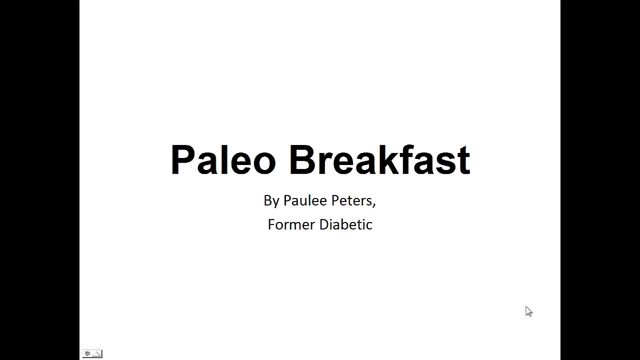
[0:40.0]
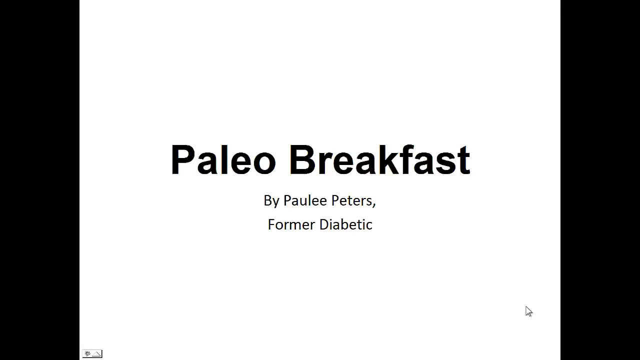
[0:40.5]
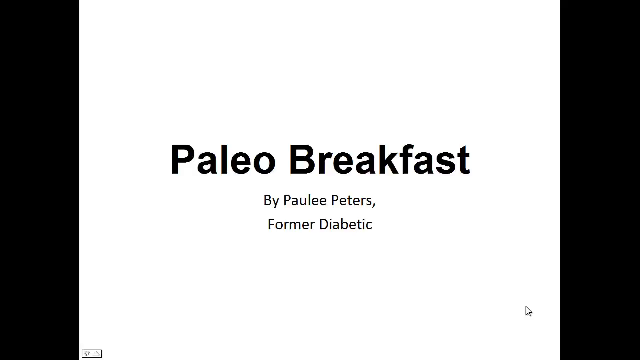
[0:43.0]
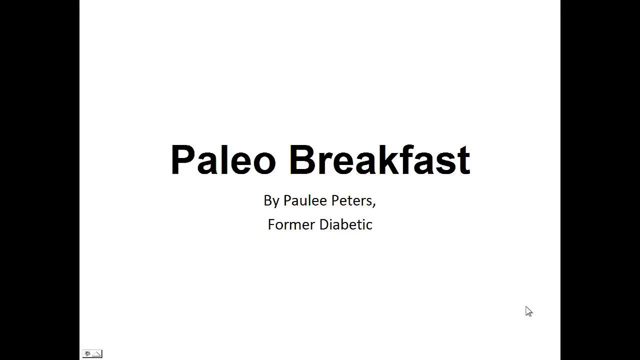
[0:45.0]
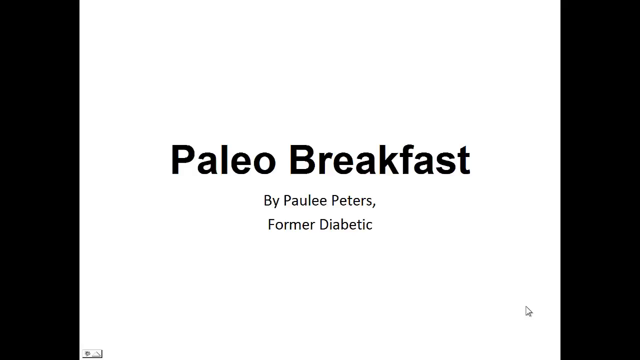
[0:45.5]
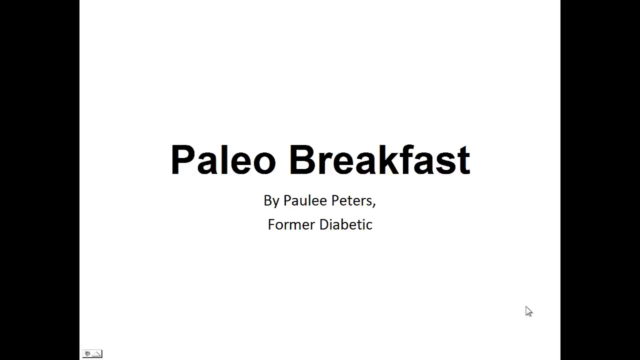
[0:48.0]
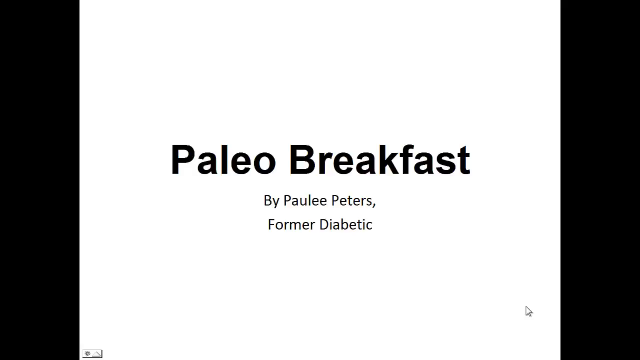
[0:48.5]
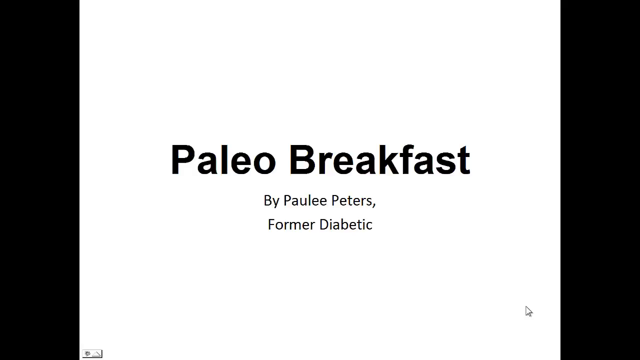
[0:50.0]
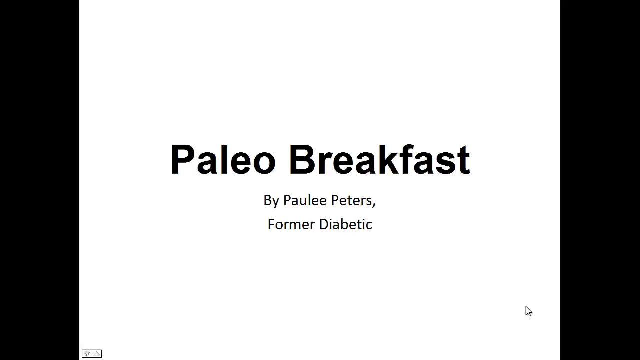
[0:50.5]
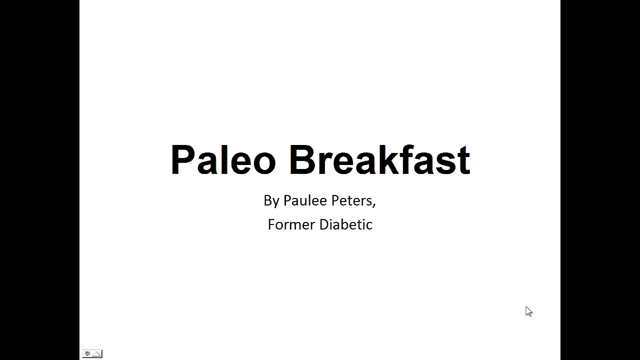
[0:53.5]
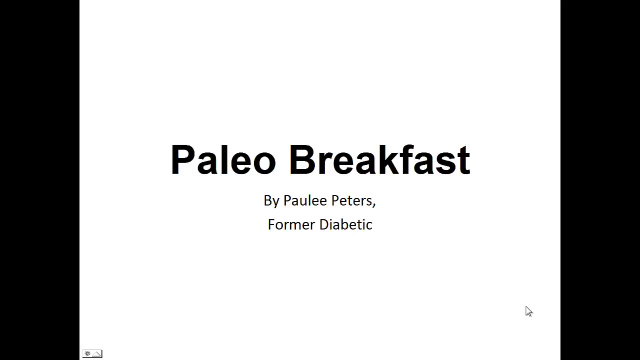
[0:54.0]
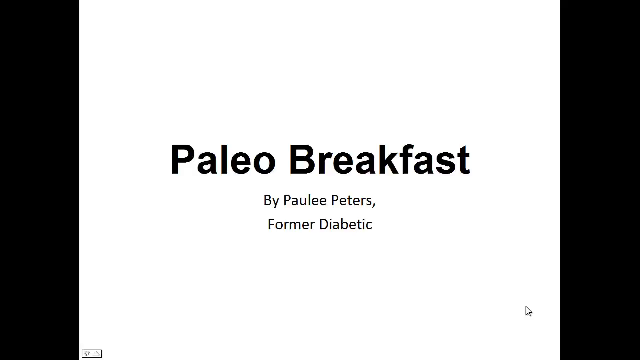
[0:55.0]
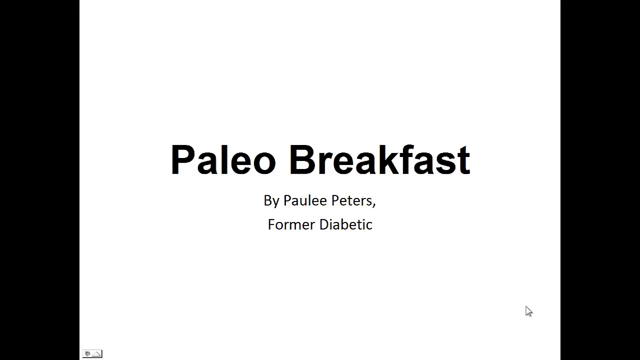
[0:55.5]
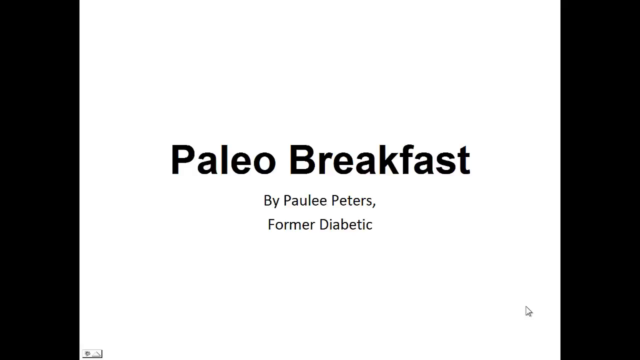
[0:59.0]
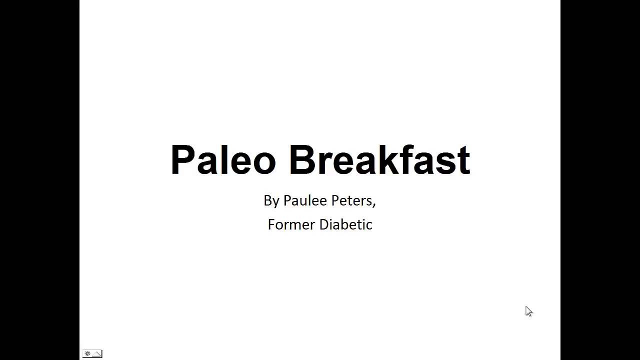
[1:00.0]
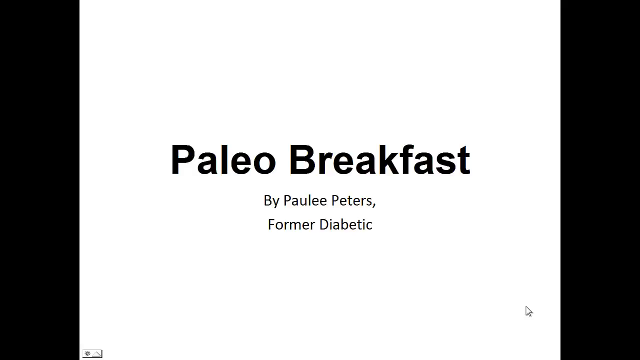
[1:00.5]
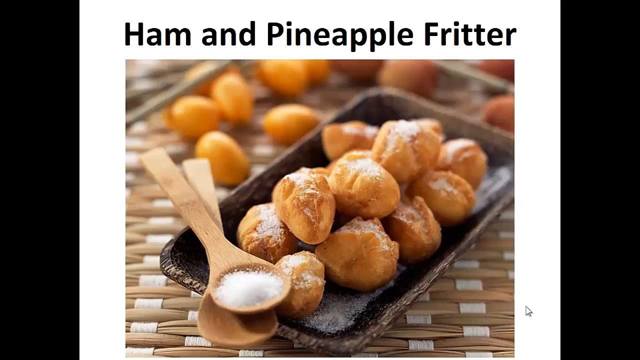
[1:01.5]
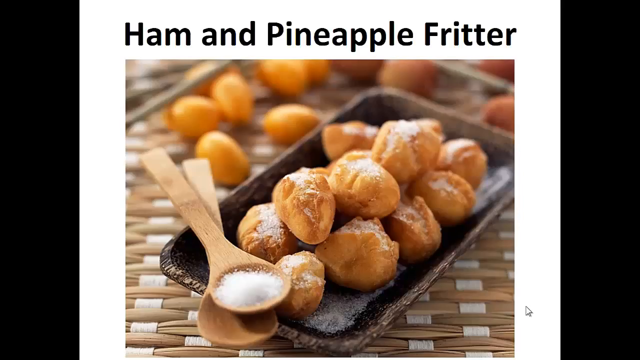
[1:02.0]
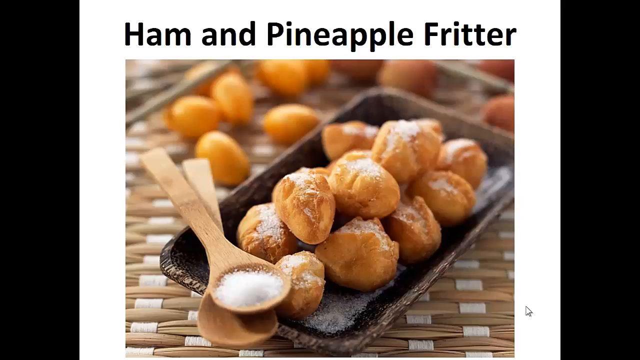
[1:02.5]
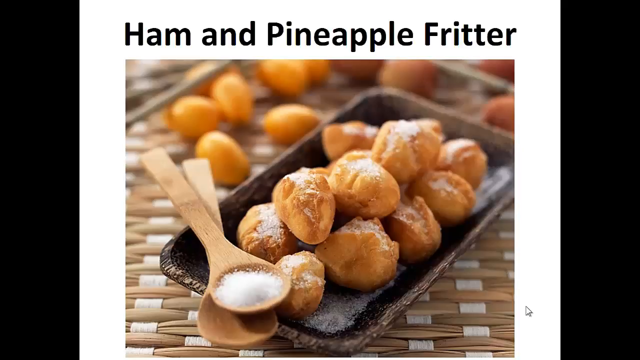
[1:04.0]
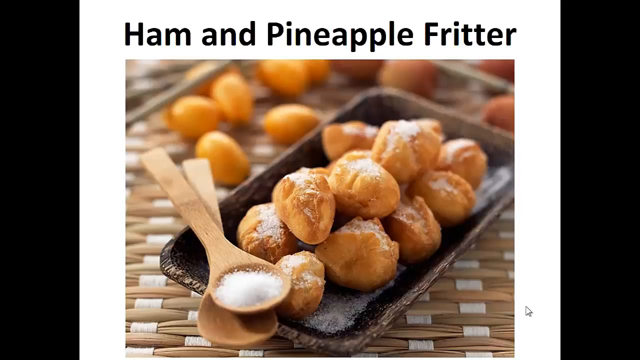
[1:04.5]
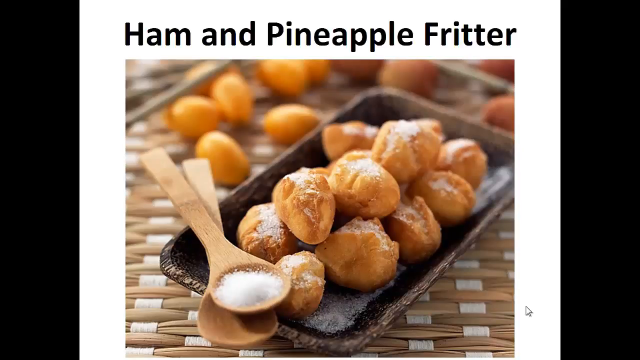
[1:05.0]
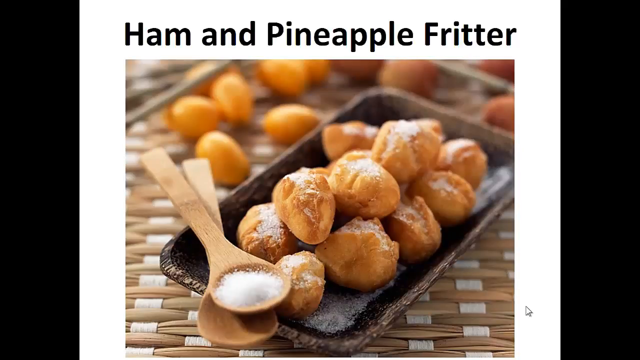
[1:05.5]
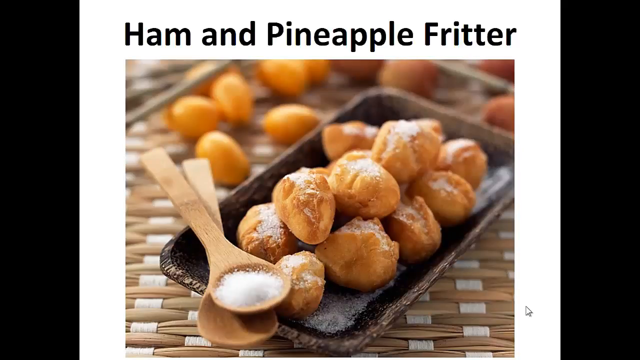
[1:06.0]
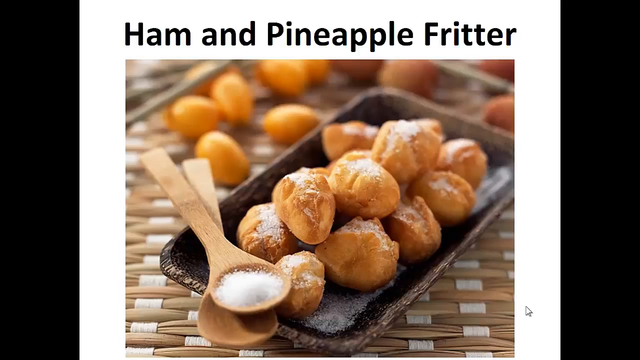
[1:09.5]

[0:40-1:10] A rectangular screen has a black background, and inside it is a white square. In the middle of the white square, bold text in a normal font size reads "paleo breakfast", with "by pauli peters" beneath it and "former diabetic" under that. A small mouse cursor at the bottom right is pointing up, close to the wording at the center. At the bottom of the video there is a small rectangle that looks like it has icons inside. Then a tray with fritters appears, with "ham and fritter" written at the top. Under the text is a photo of the fritters and two wooden spoons on top of each other; the top spoon has white solids that look like sugar or salt.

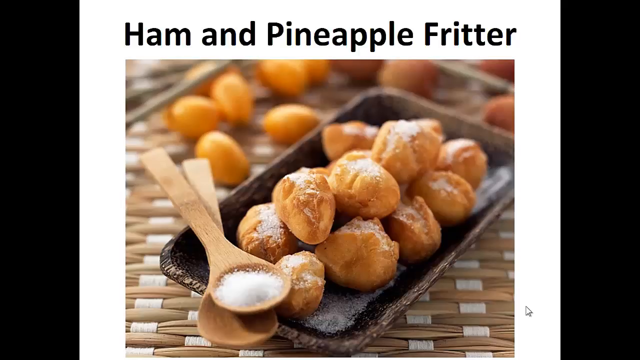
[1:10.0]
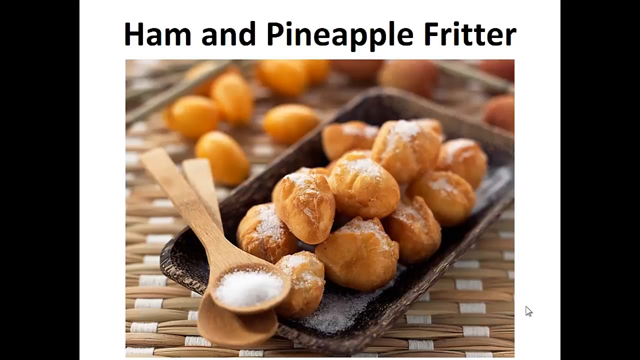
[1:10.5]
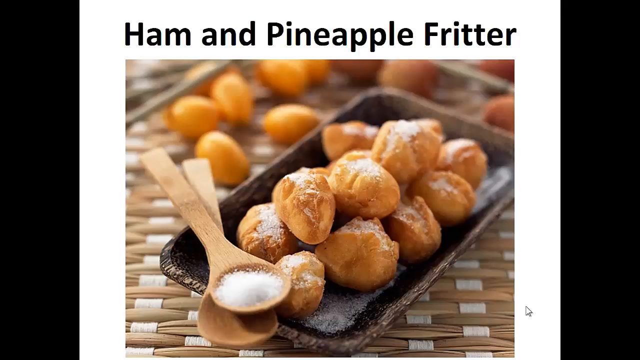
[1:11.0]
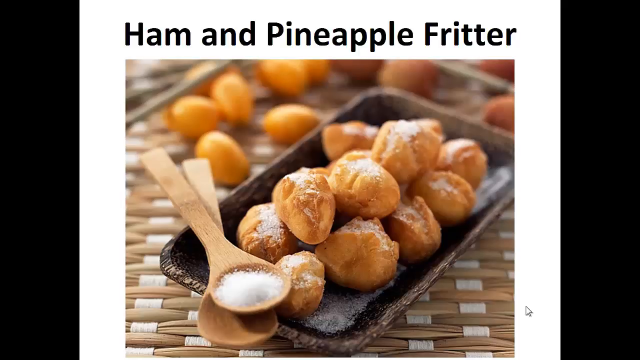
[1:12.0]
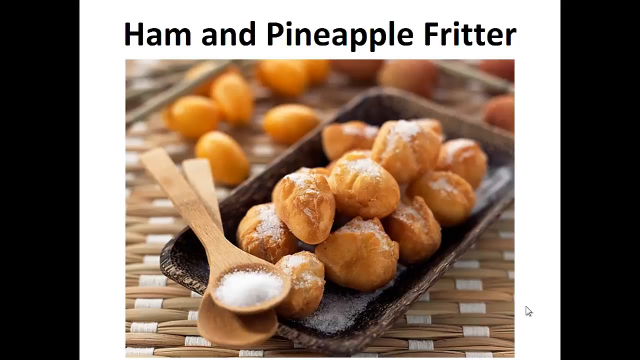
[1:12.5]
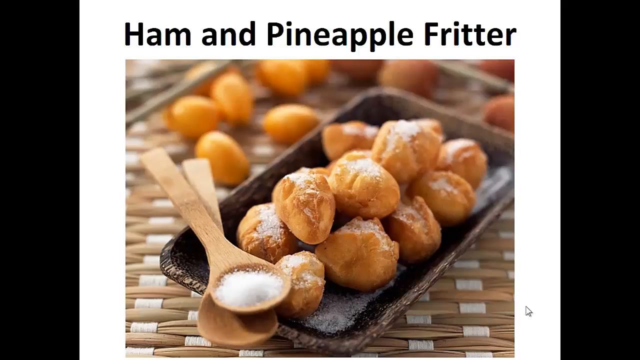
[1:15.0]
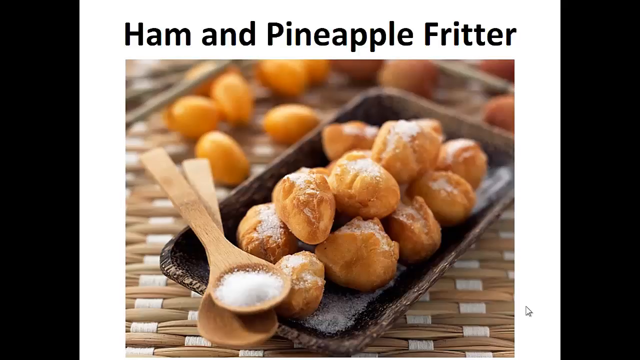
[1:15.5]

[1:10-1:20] Inside a black screen is a square white screen with the words "ham and pineapple fritter" written from left to right in bold black. Golden fritters in a tray look very crispy and have white toppings that look like sugar. Two wooden spoons are on top of each other; the top one has white solid things on it that look like sugar. Under the tray is a brown and white woven mat or table. More fritters are laying around on the mat, and the photo is a little blurry where those fritters on the table are.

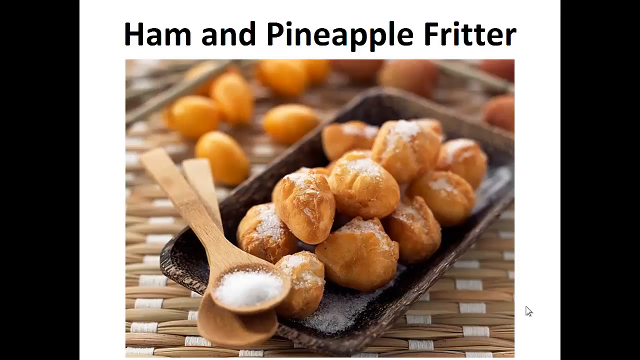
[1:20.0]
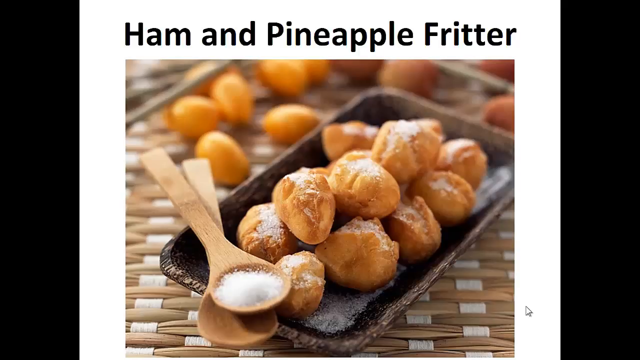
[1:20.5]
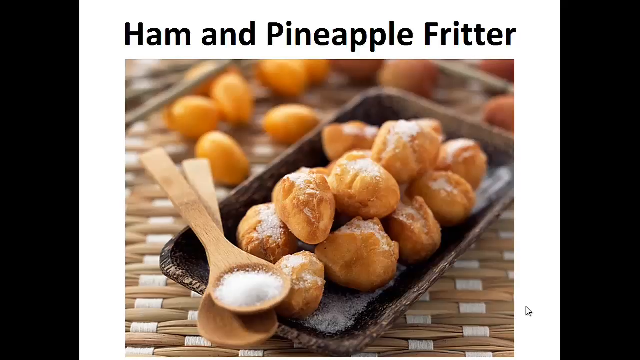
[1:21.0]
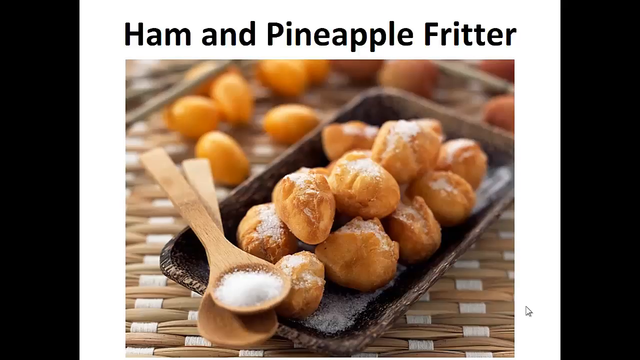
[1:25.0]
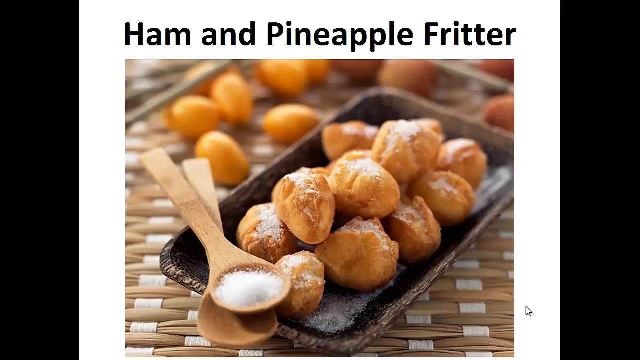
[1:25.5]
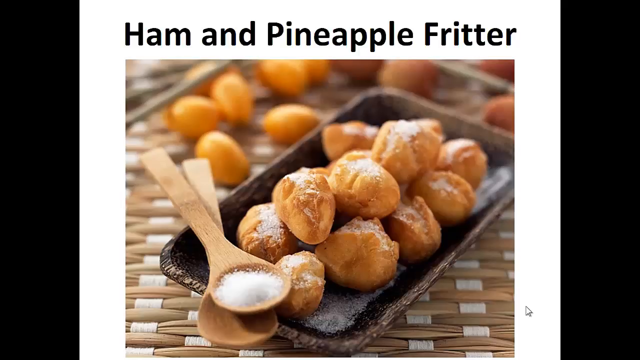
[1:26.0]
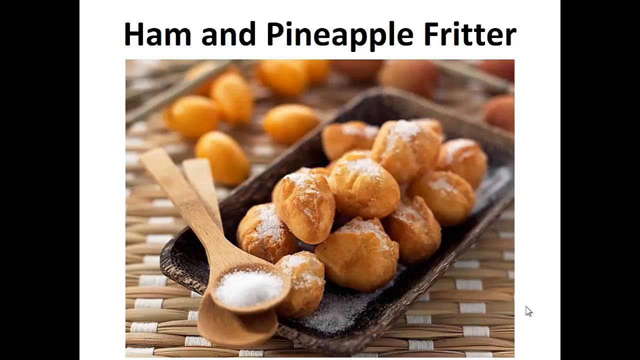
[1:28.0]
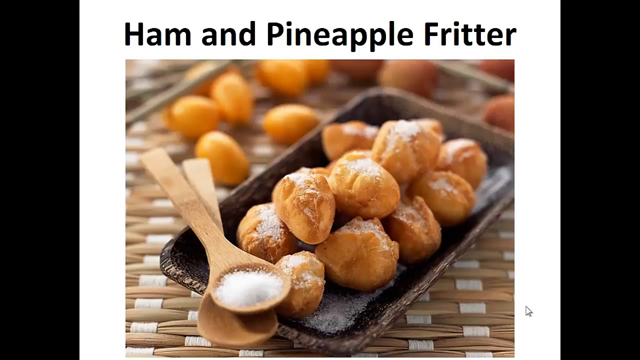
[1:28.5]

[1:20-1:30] A black screen has a white square in the middle, with the words "ham and pineapple fritter" in what looks like a bold black handwriting font. Under the wording is a picture of fritters that look very appetizing, with white toppings that look like sugar, and some sugar in the tray where the fritters are. The tray is dark brown and looks like it is not made from metal or wood. Two wooden spoons are on top of each other; the top one has some sugar on it and the bottom one has nothing on it. A brown and white woven mat is underneath, with nine fritters laying around on it.